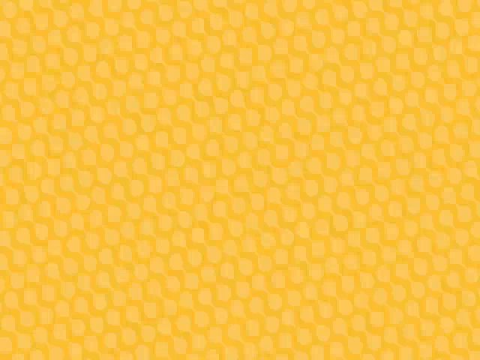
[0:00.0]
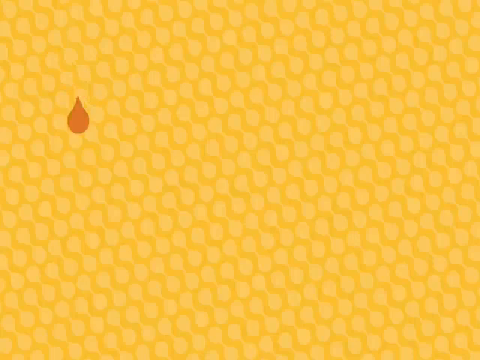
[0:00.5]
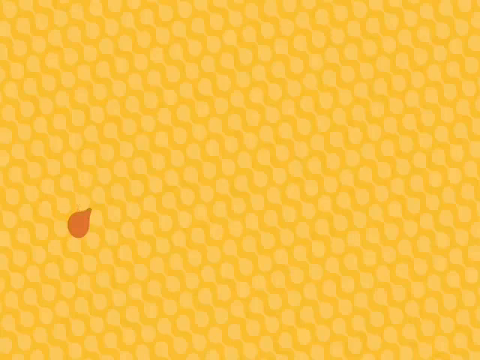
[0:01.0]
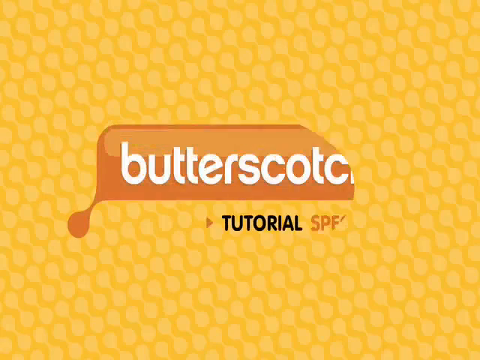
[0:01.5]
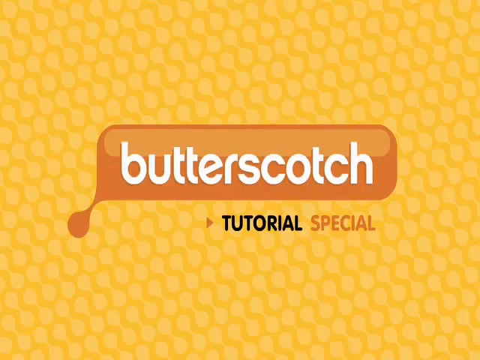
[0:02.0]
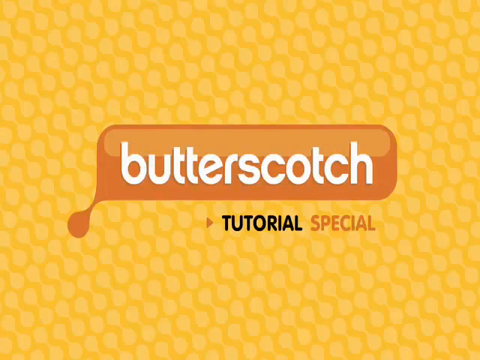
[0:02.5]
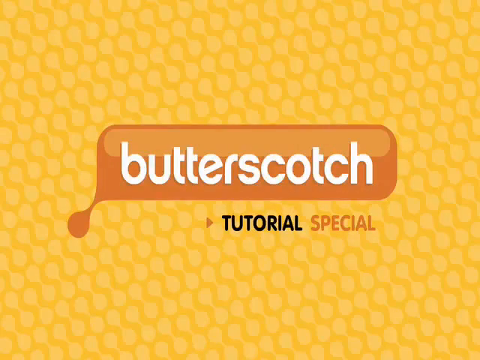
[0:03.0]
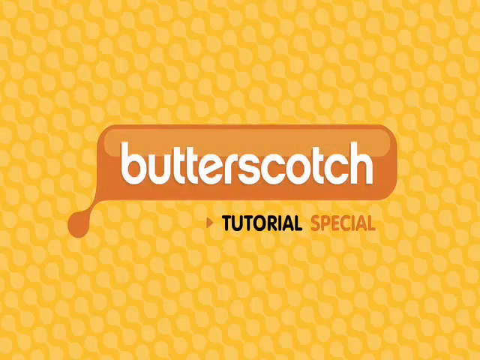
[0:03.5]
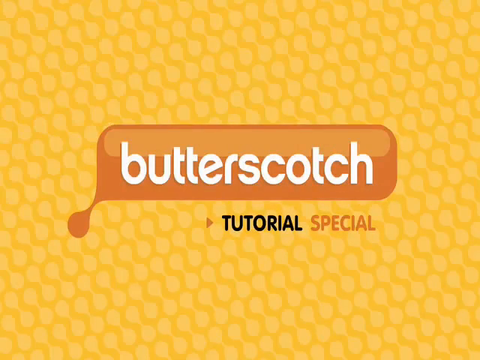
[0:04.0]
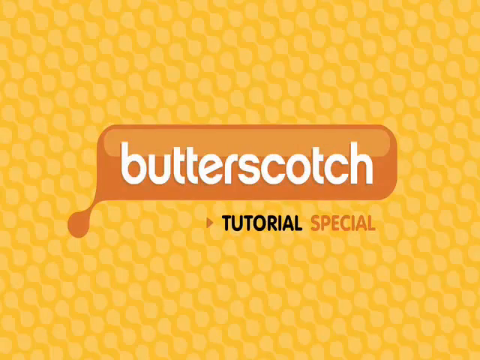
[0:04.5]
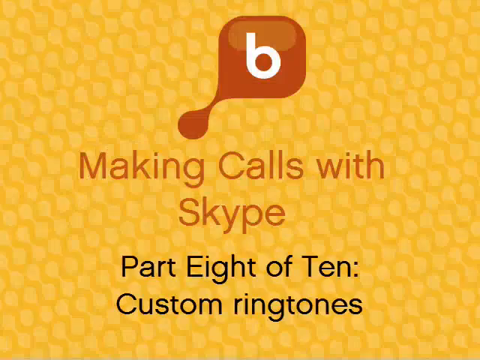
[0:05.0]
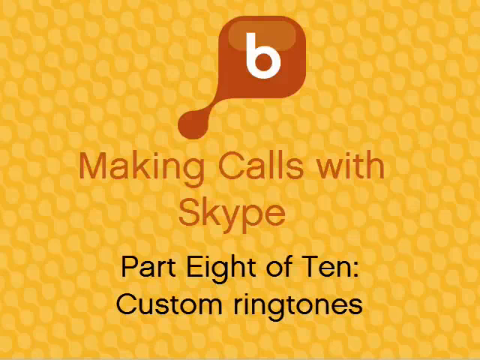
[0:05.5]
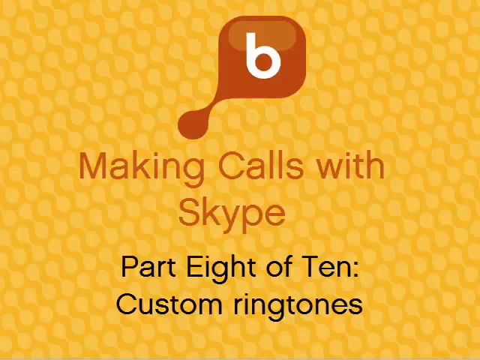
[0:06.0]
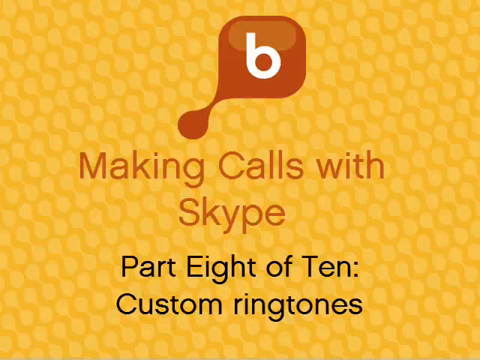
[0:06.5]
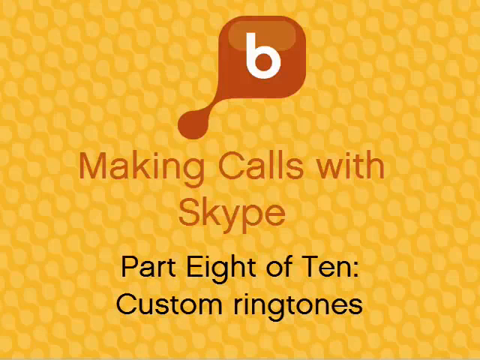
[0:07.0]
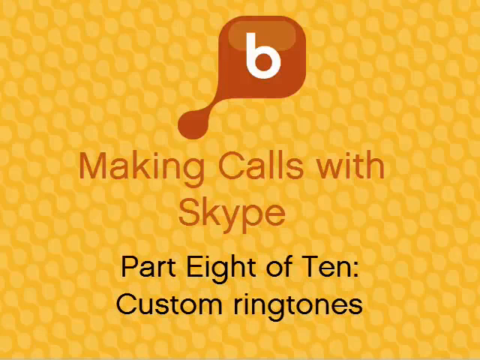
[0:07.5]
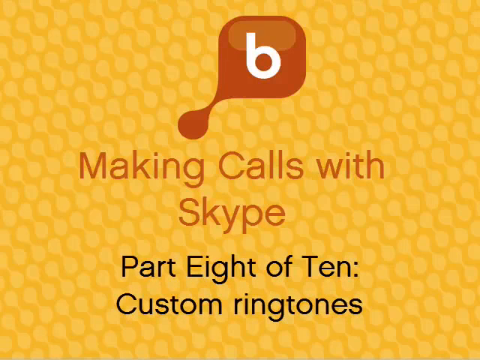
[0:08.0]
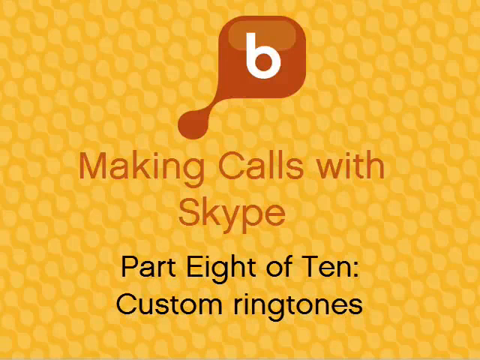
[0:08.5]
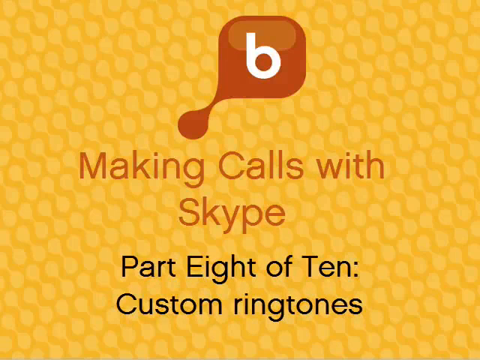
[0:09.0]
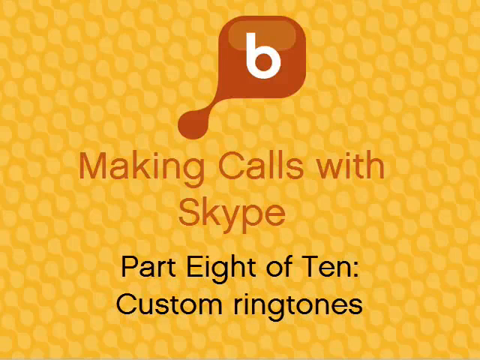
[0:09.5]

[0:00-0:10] The opening screen is mostly two tones of yellow, with what looks almost like a honeycomb-type pattern of more or less overlapping ovals. A kind of brownish drop, almost teardrop-shaped, comes from the upper left of the screen and bursts into a long rectangle with rounded edges. Inside it, in white, is "butterscotch" in all lowercase letters; beneath that, in black all caps, is "TUTORIAL", and then, in the same caramel brown, in all caps, "SPECIAL". The screen holds for a second or two before moving to another screen with the same honeycomb-looking background. The word "butterscotch" is now just a smaller square shape with the letter "b" in it. Beneath it, in the caramel color, is "Making calls with Skype", and beneath that, in black, "Part Eight of Ten: Custom ringtones", with "custom ringtones" on its own line at the bottom. The screen holds for a bit, then quickly jumps to what looks like a computer monitor screen.